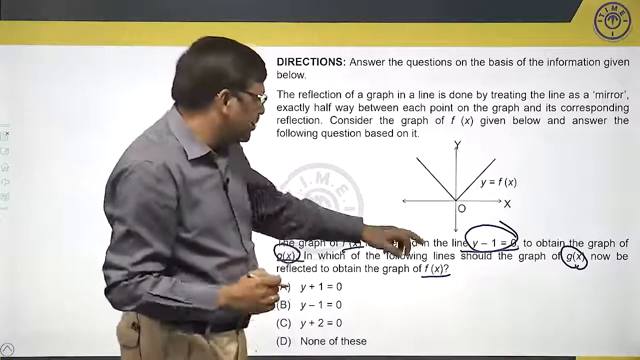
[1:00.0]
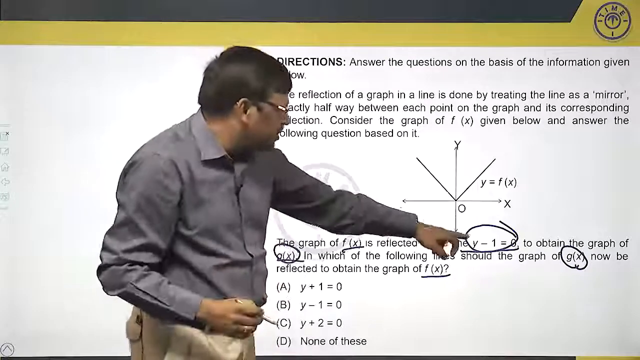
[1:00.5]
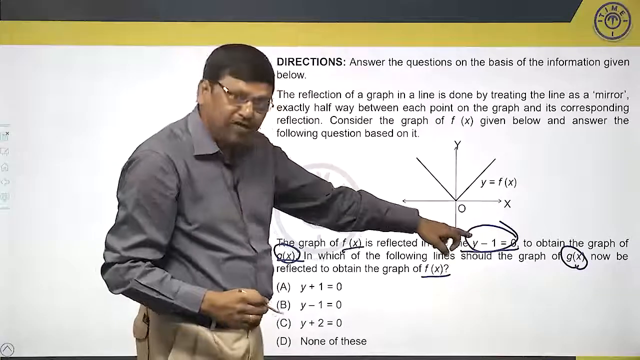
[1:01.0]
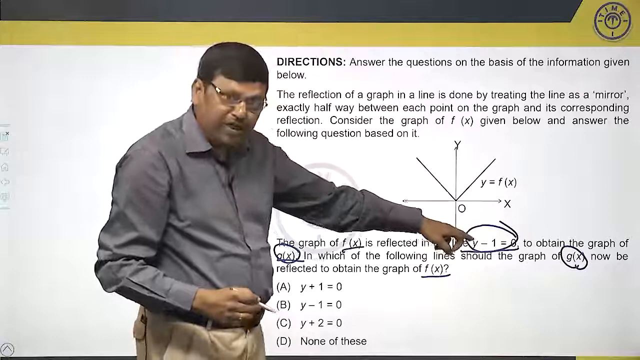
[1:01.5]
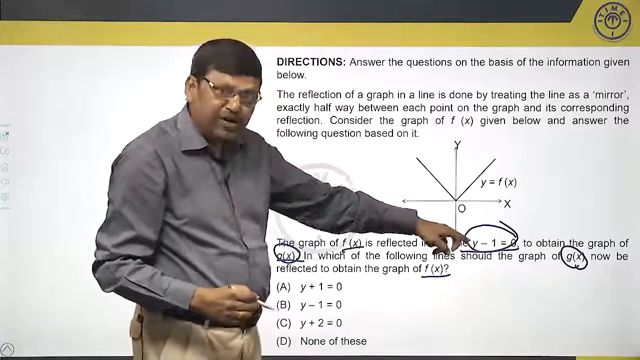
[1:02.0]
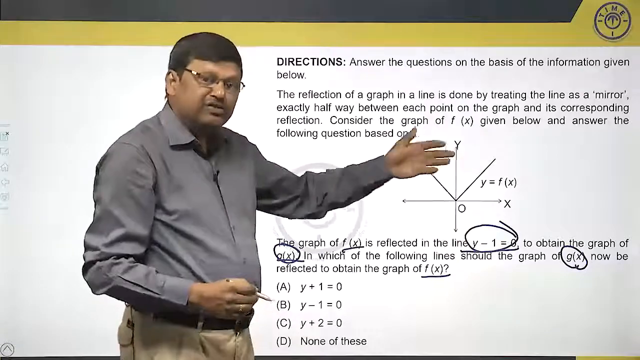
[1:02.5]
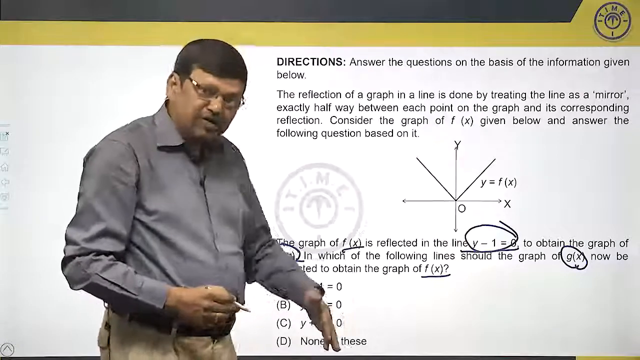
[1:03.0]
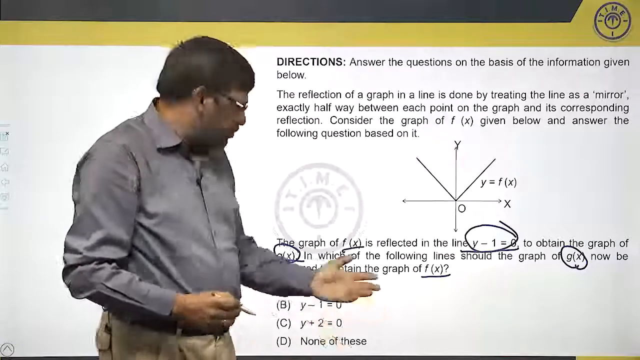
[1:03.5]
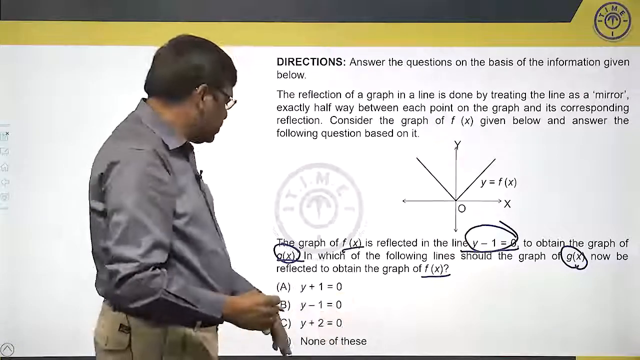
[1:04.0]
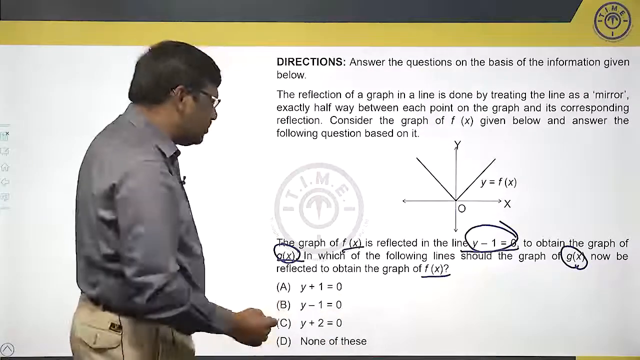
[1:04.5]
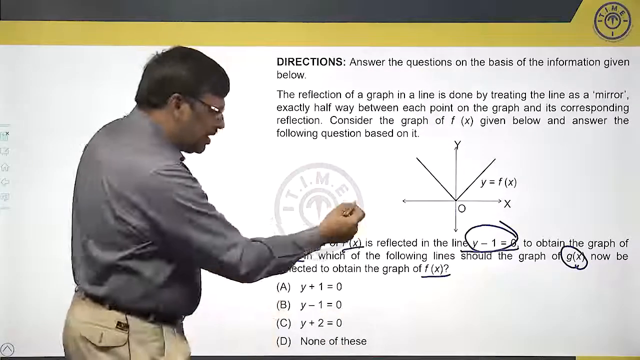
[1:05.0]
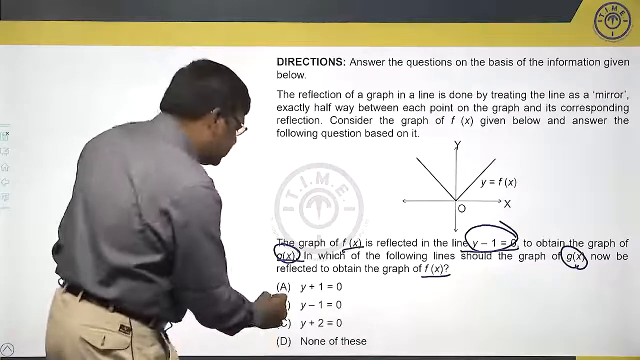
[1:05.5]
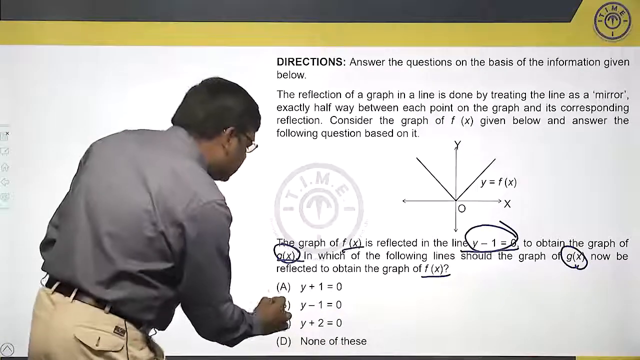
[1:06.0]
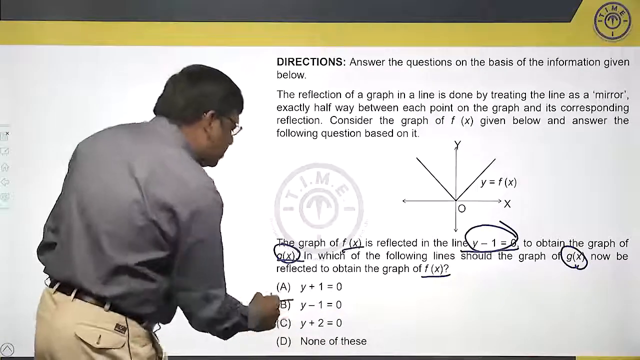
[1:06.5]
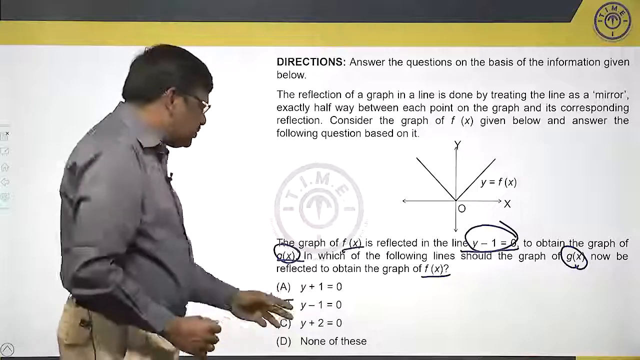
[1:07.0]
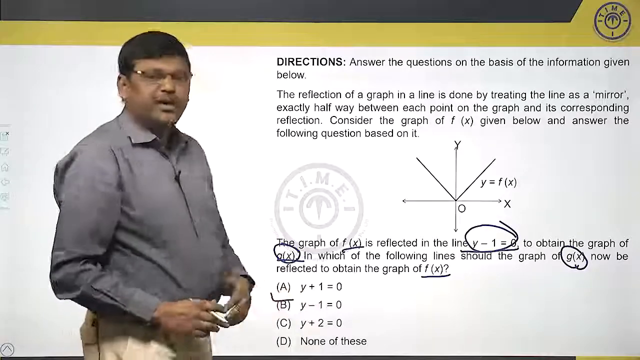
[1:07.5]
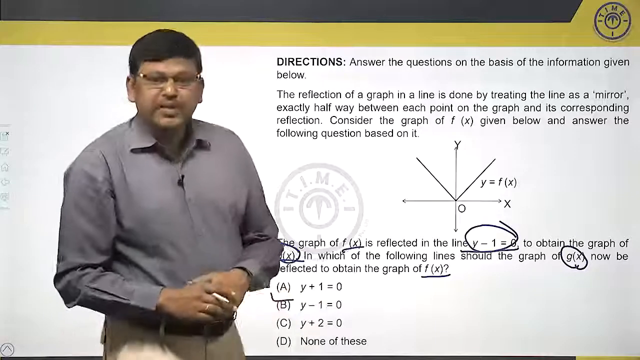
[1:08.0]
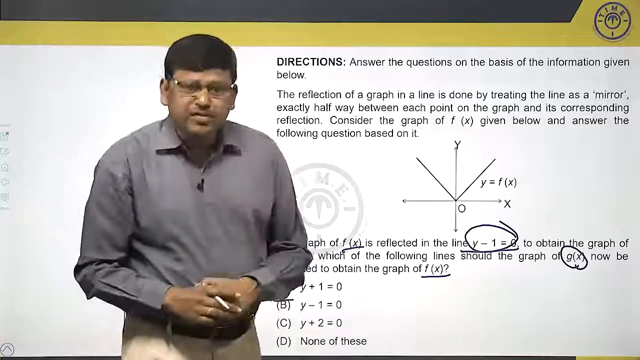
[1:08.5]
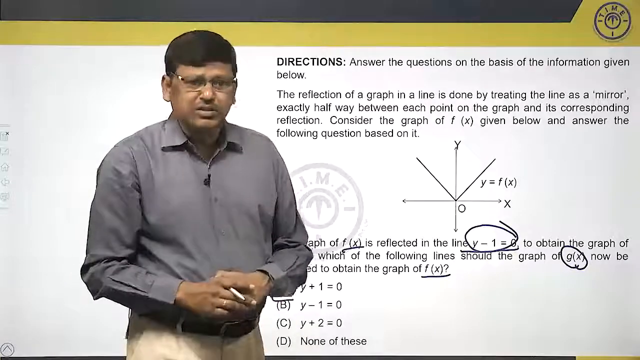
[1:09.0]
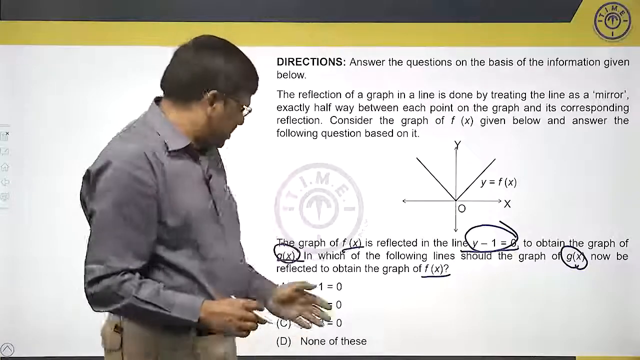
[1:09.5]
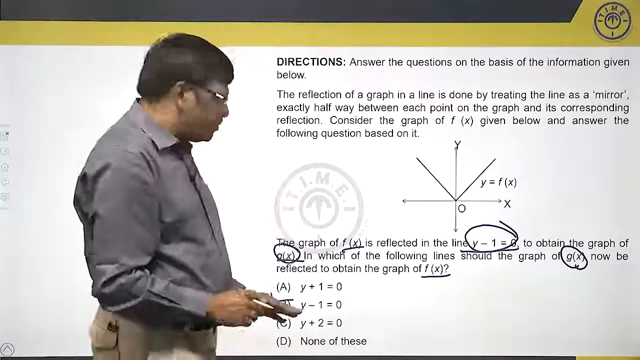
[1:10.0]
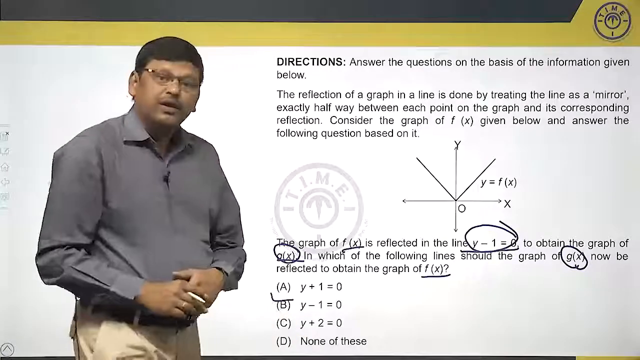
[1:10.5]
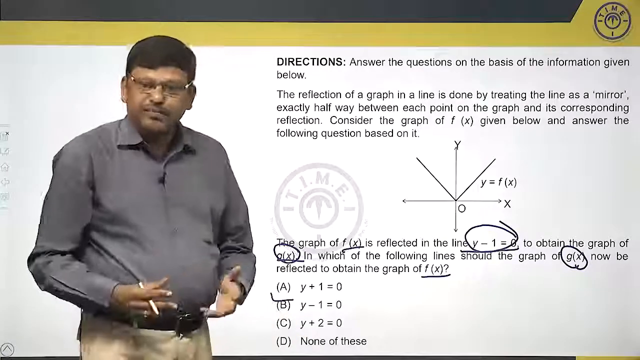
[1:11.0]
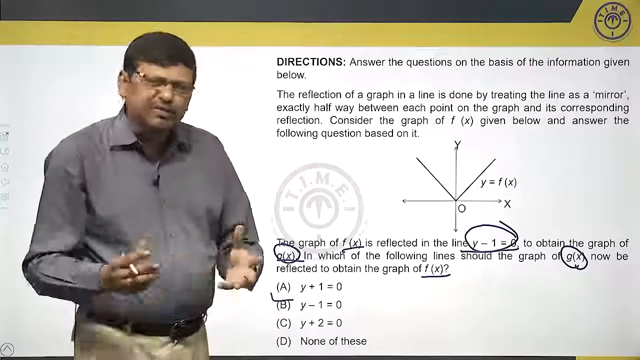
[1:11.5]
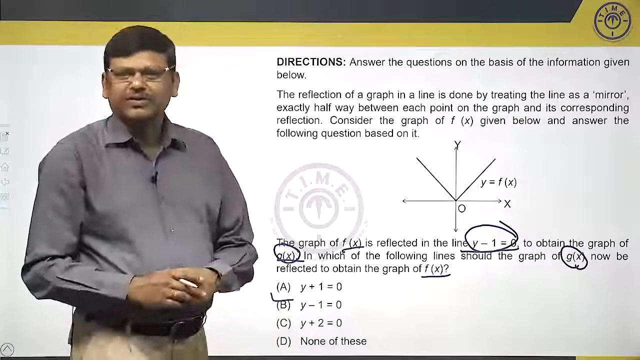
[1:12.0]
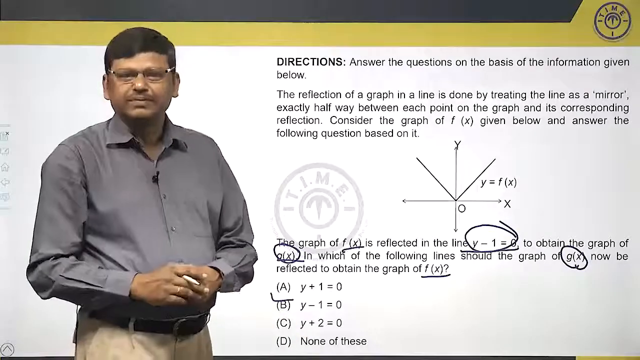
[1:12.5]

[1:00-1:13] The man points back at the screen and draws an L-shape under answer option a, which shows y plus one equals zero. He points at the question stem with his left middle finger, then puts his hands together and looks at the camera, gesturing toward the answer choices with an open palm before returning his hand to its position in front of his belly. He squints slightly, seemingly explaining and emphasizing his speech with hand gestures, before the video abruptly ends. The screen is marked up with black marker, and the presenter still holds the white pen in his right hand.